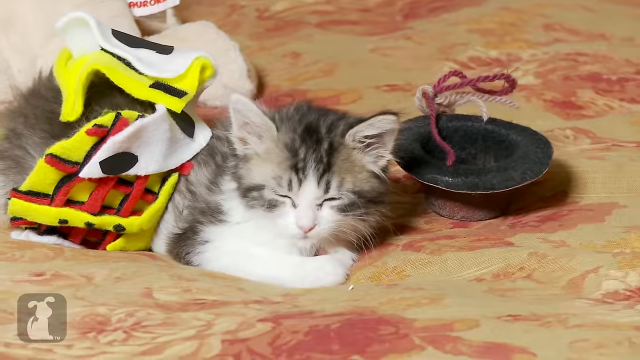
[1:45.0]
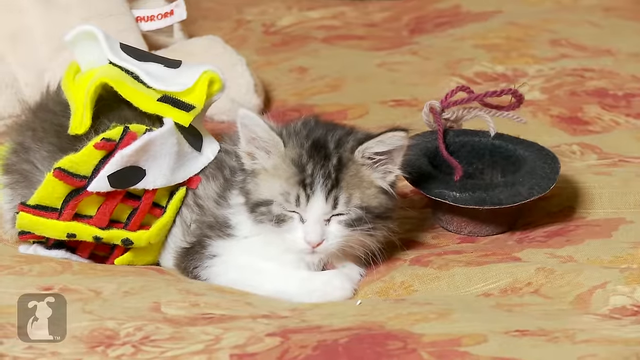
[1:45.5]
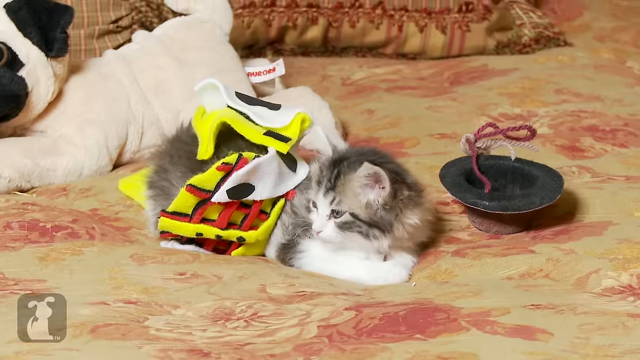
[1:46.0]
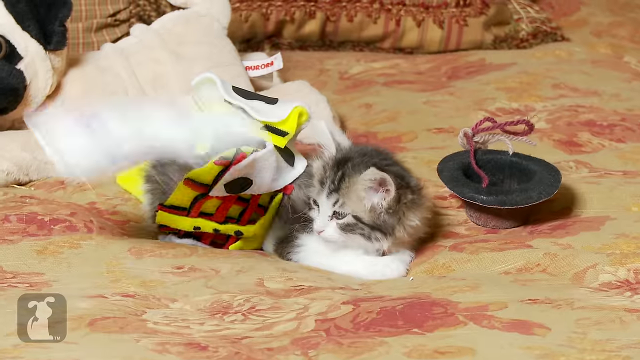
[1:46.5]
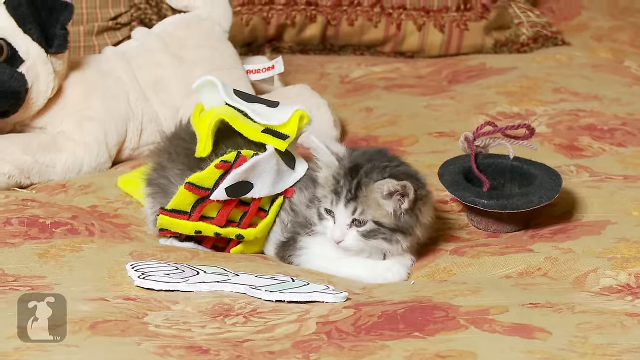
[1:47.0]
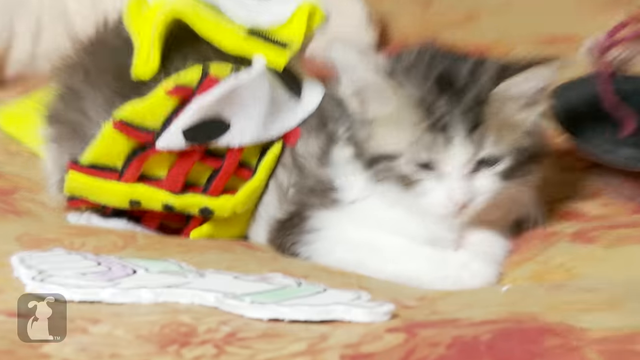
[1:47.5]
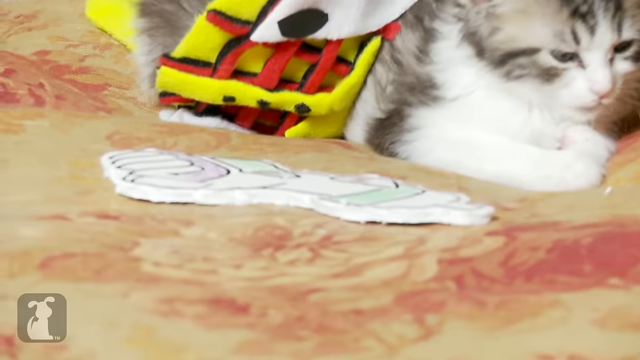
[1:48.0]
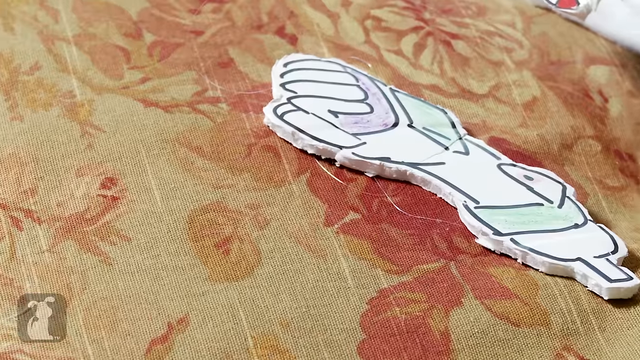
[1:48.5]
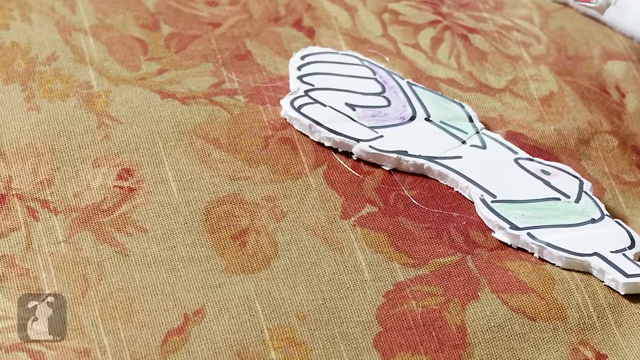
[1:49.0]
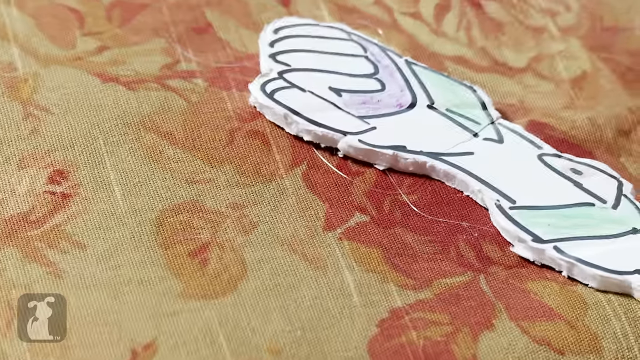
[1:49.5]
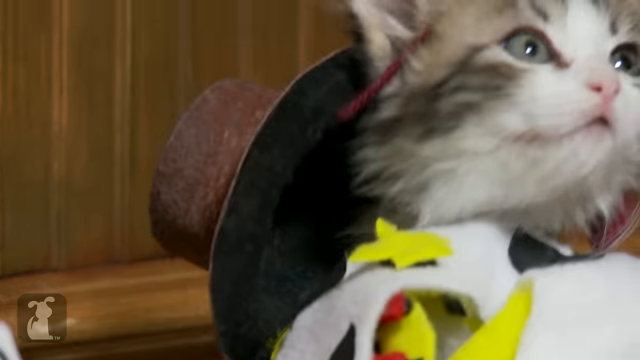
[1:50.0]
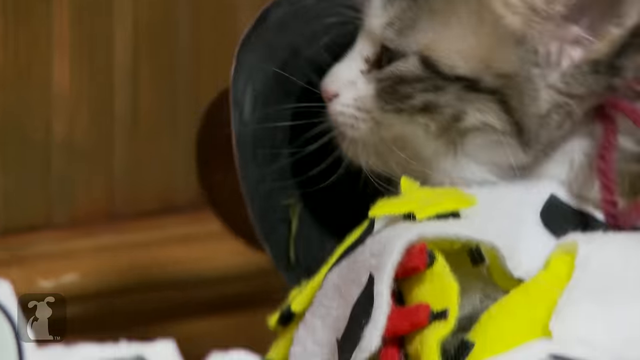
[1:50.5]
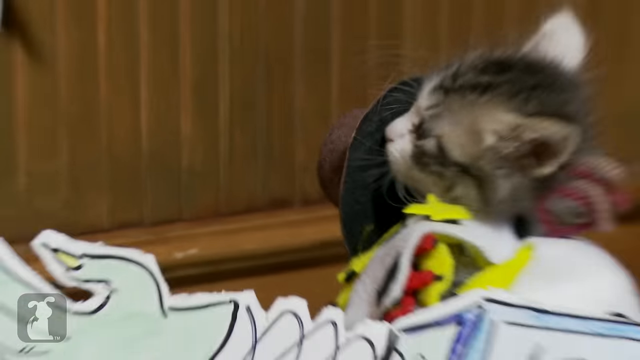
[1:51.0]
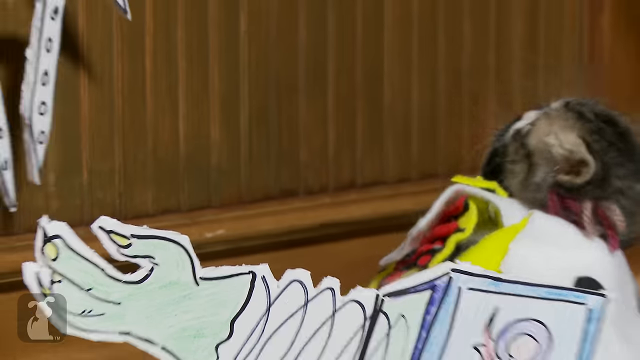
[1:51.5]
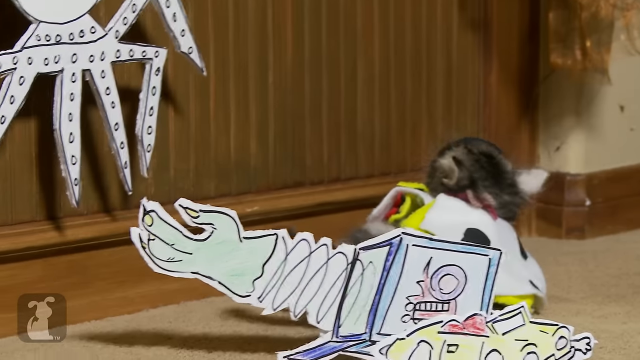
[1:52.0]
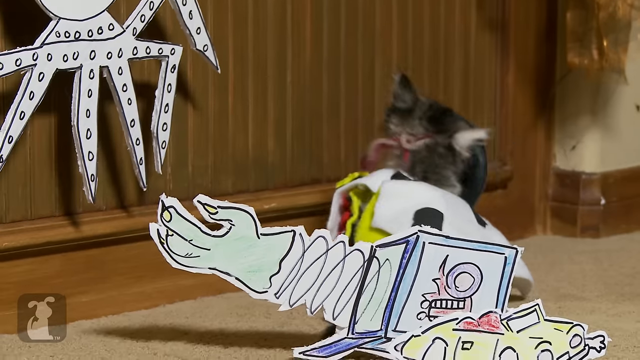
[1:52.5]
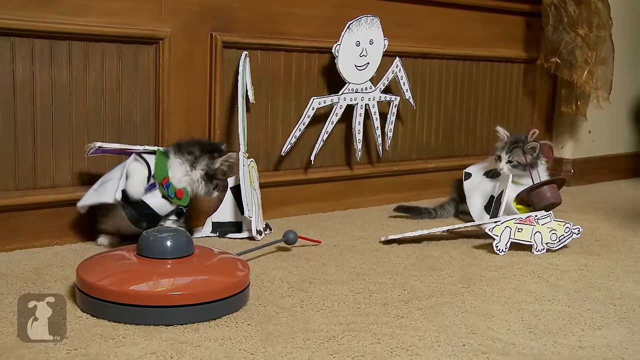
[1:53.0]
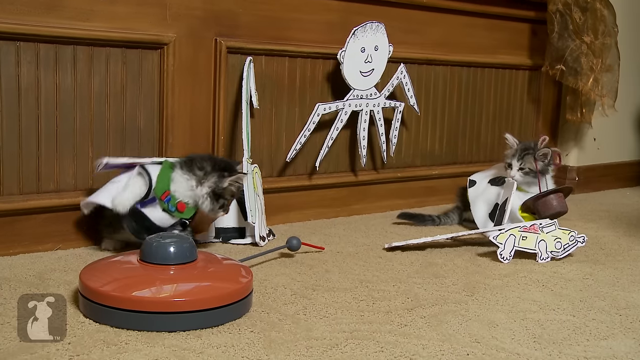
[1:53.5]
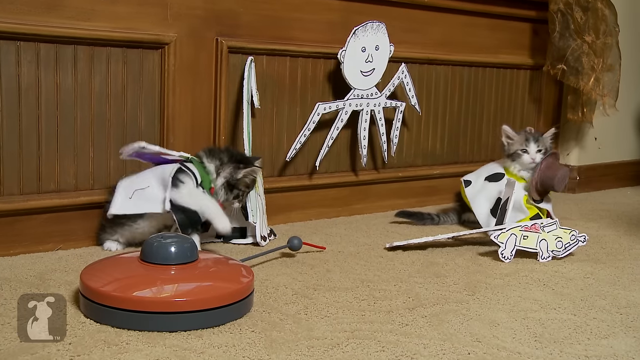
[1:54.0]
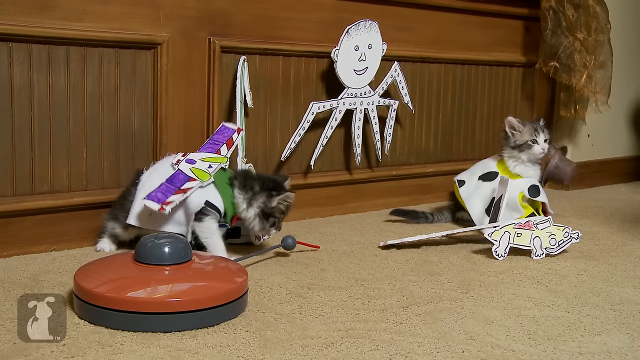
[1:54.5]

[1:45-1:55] The sleepy kittens are not very interested when someone off-screen throws a figure at them. The figure is made of cardboard and drawn on with markers, but from the camera angle it is very difficult to see what it is. The kitten, which was asleep and is now awake, barely looks at it, only sniffing at it before turning its head away. The scene then jumps to both kittens; one of them is still having trouble moving around with the cardboard cut-outs strapped to its back. Neither kitten is very animated, and neither seems to know what is going on.